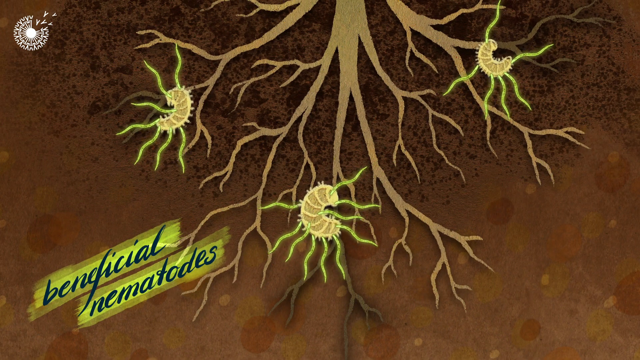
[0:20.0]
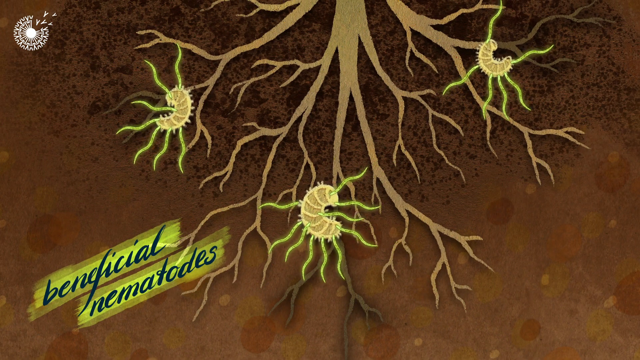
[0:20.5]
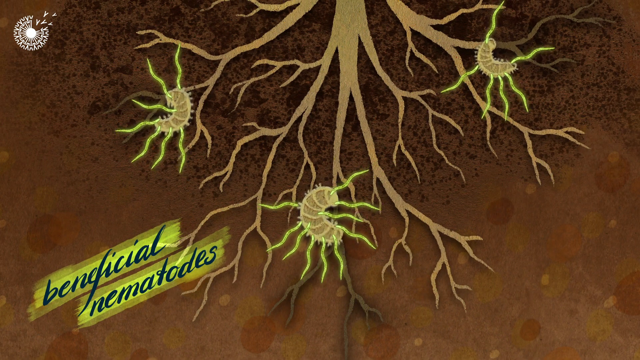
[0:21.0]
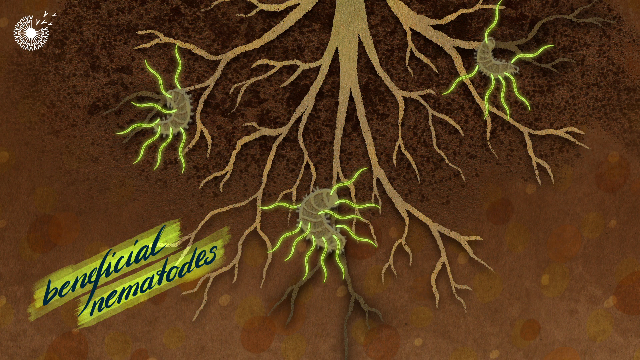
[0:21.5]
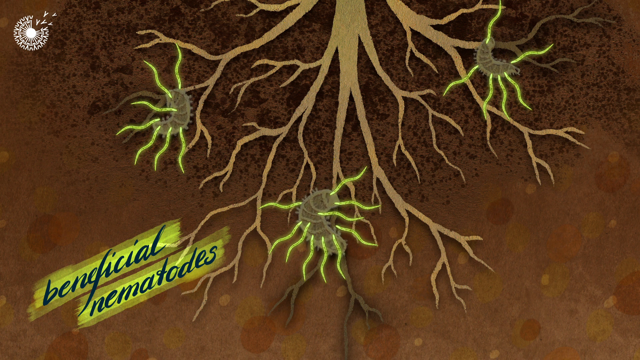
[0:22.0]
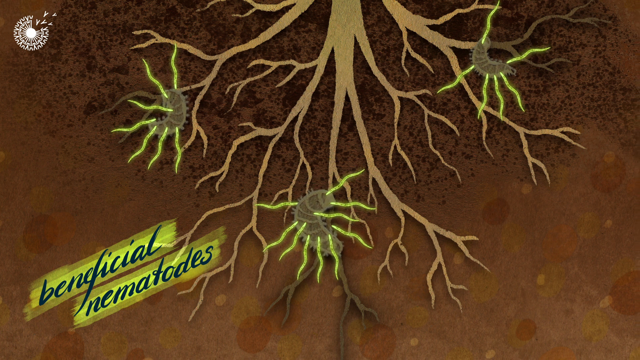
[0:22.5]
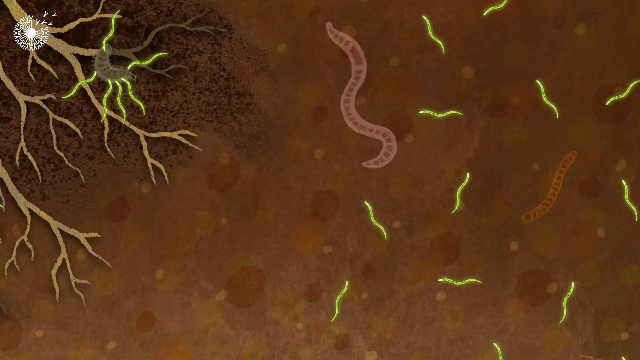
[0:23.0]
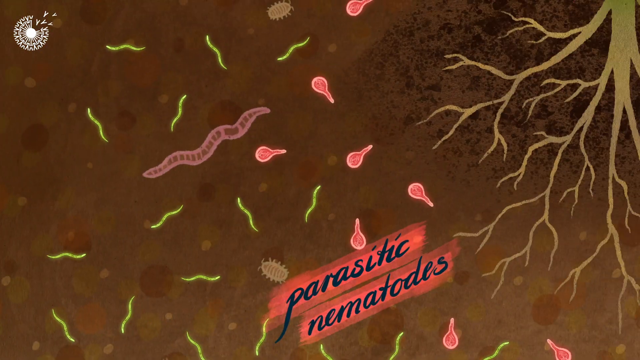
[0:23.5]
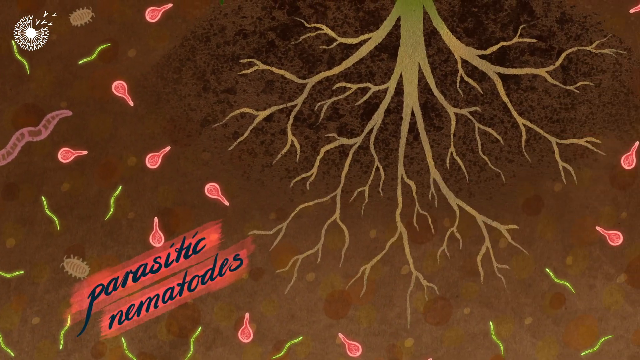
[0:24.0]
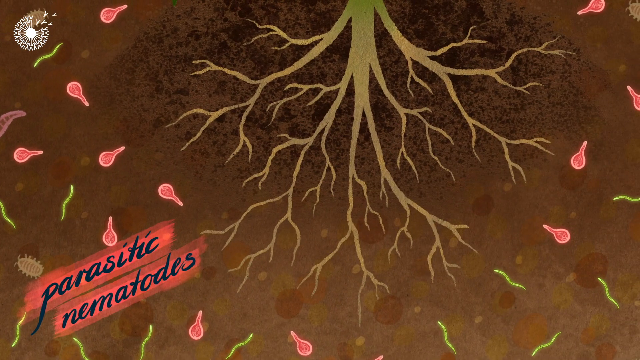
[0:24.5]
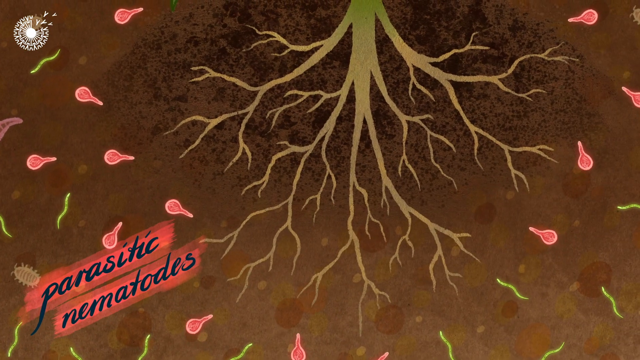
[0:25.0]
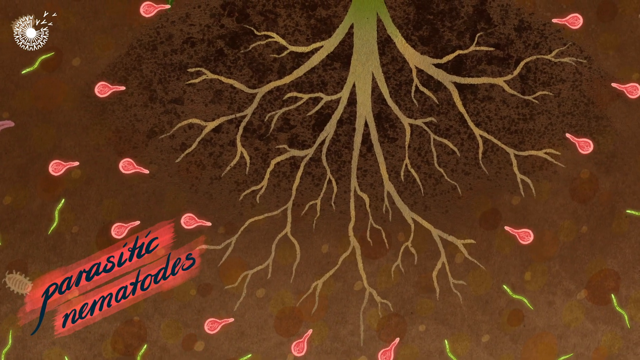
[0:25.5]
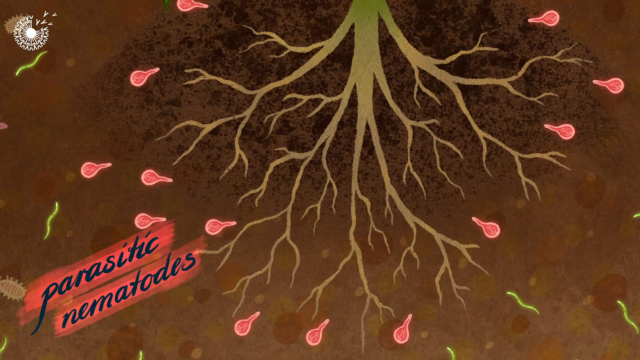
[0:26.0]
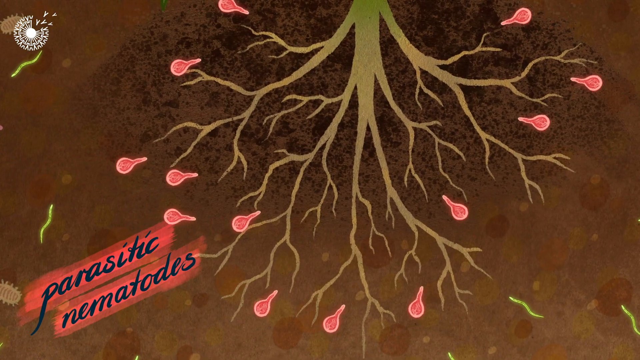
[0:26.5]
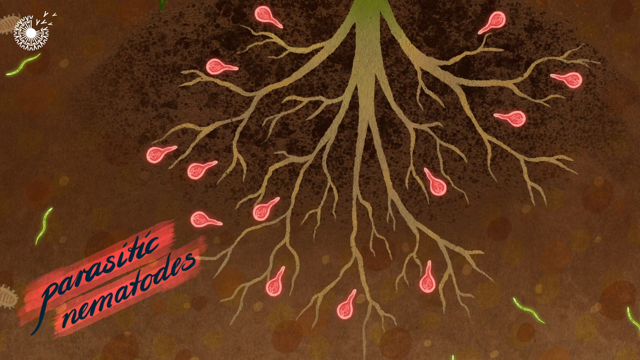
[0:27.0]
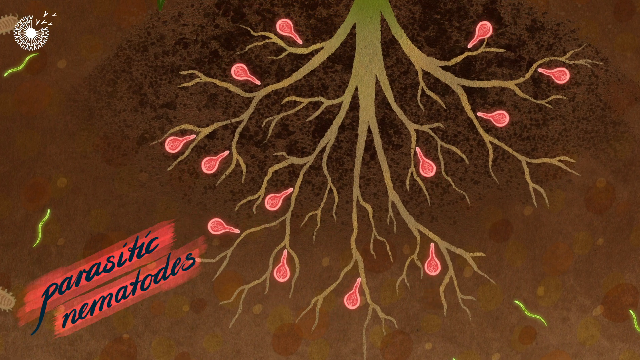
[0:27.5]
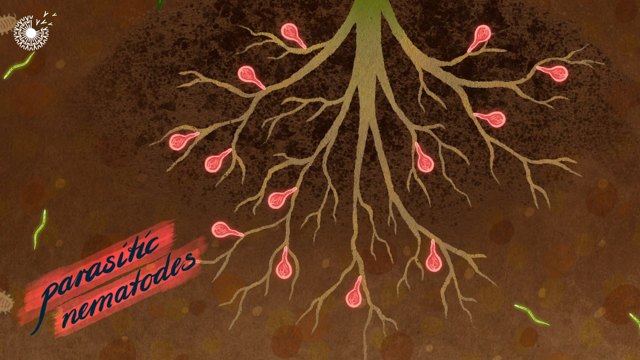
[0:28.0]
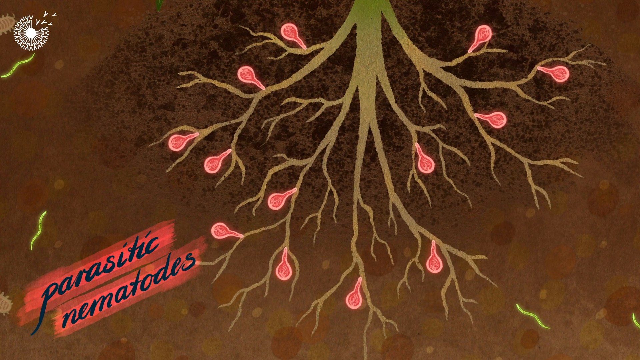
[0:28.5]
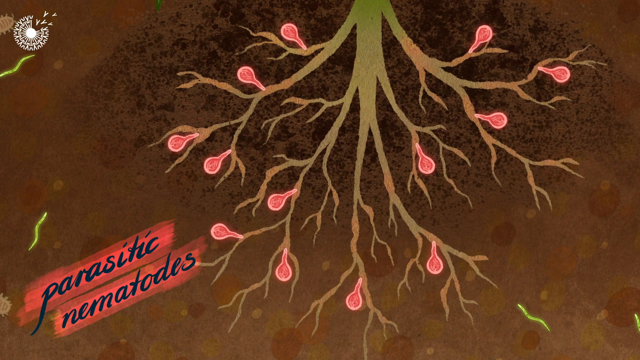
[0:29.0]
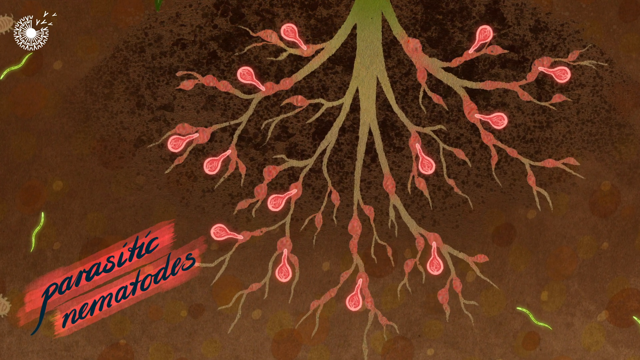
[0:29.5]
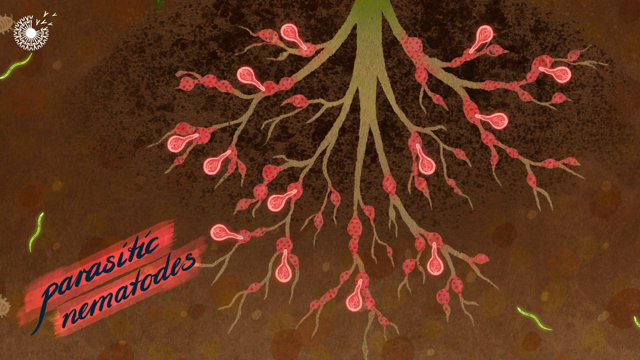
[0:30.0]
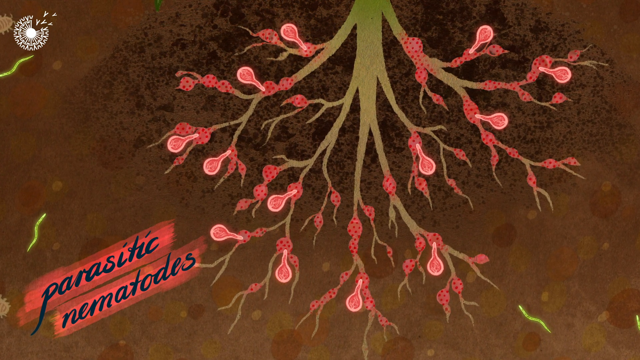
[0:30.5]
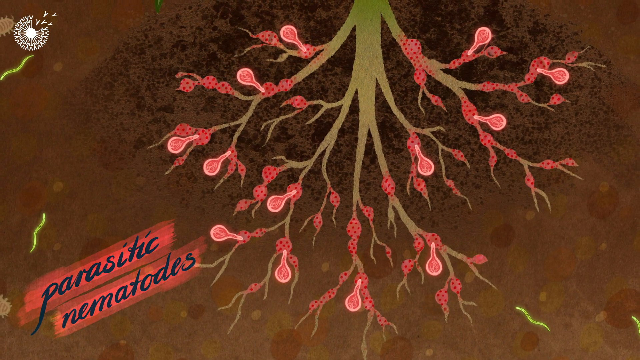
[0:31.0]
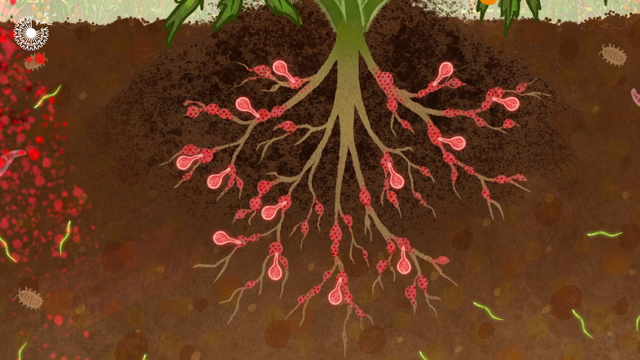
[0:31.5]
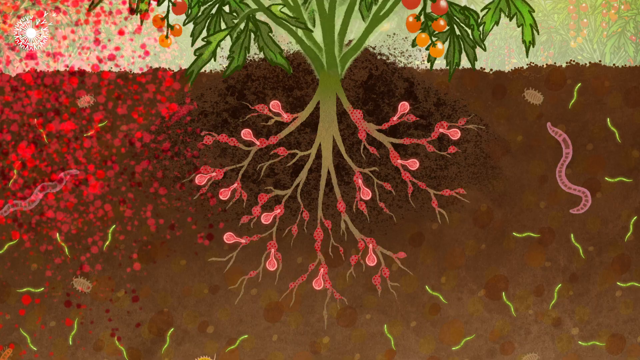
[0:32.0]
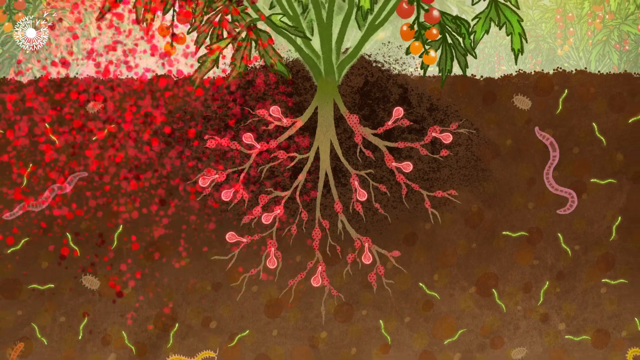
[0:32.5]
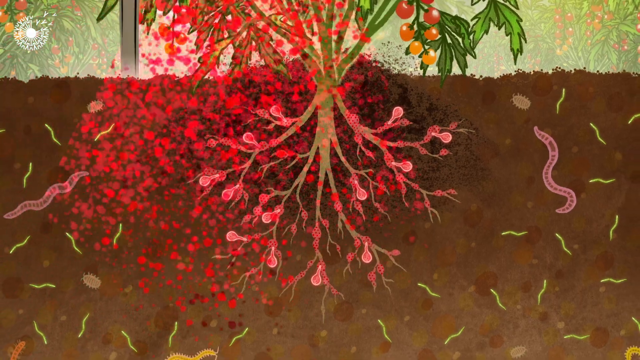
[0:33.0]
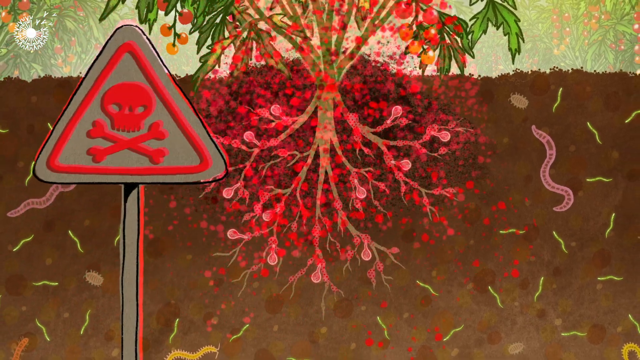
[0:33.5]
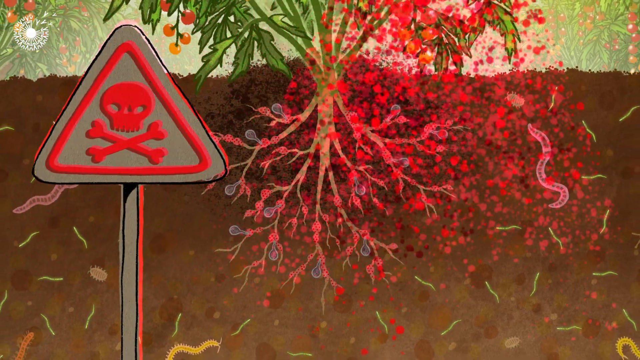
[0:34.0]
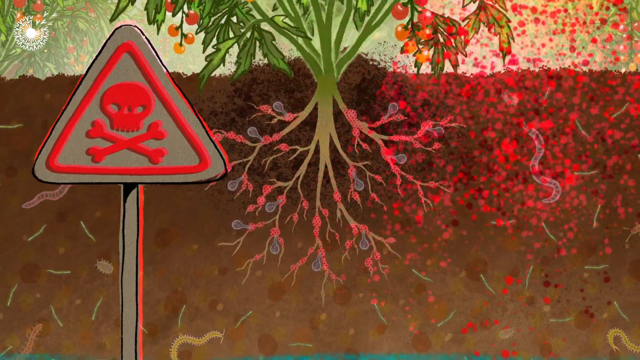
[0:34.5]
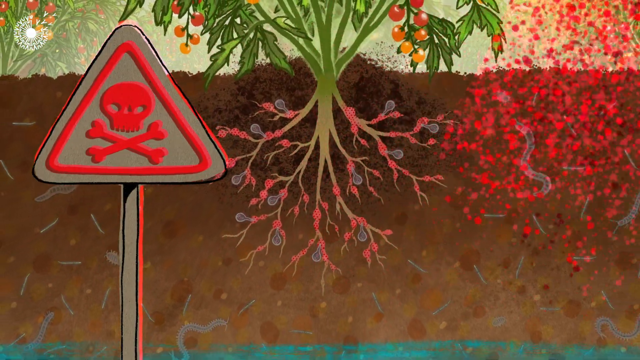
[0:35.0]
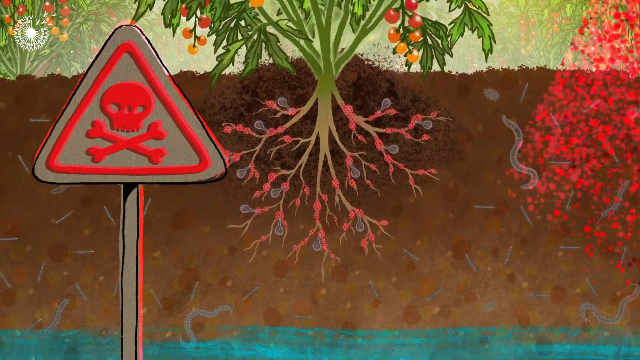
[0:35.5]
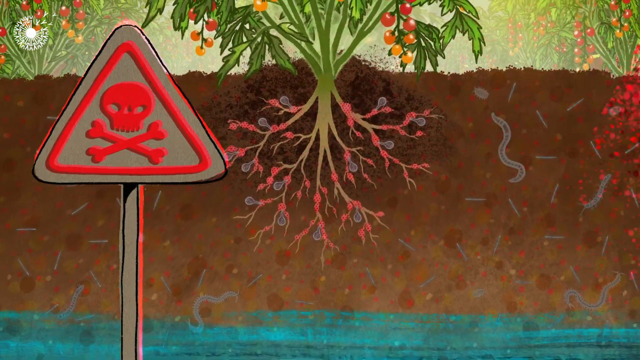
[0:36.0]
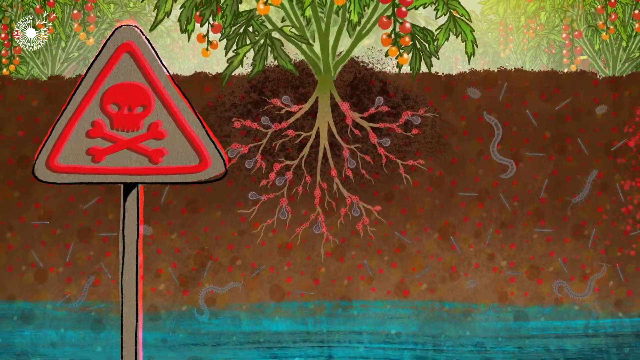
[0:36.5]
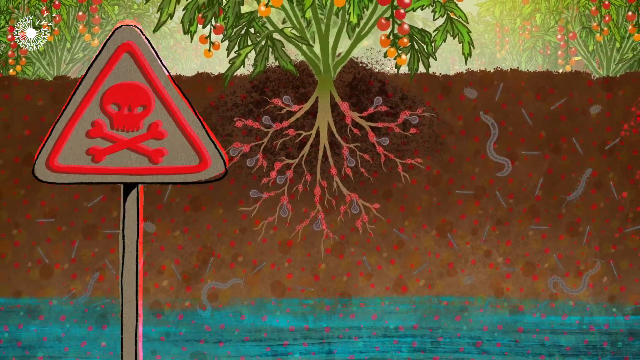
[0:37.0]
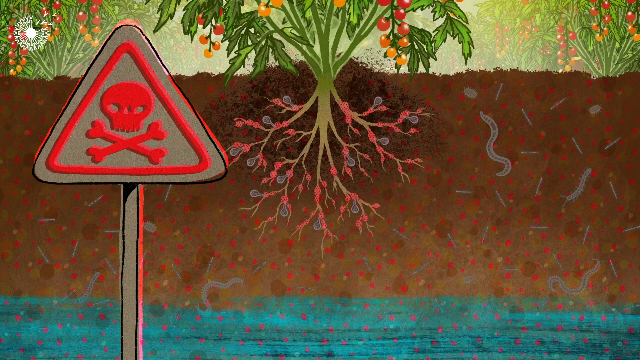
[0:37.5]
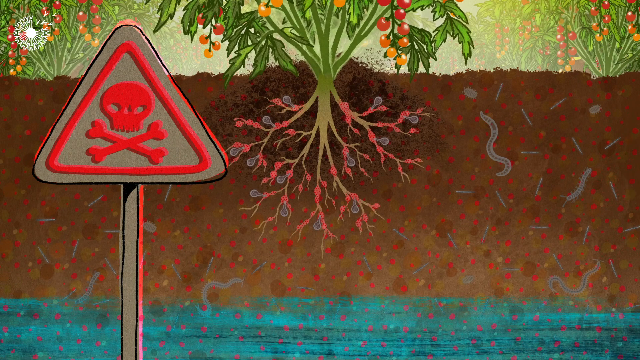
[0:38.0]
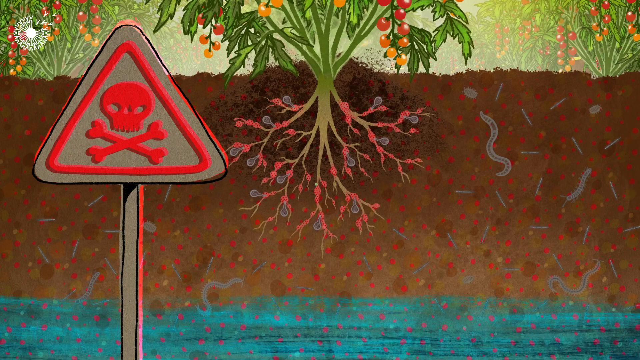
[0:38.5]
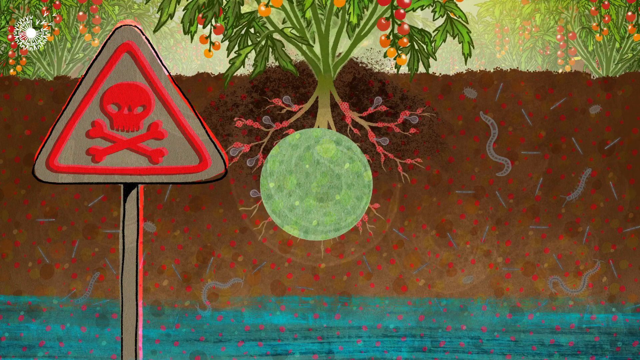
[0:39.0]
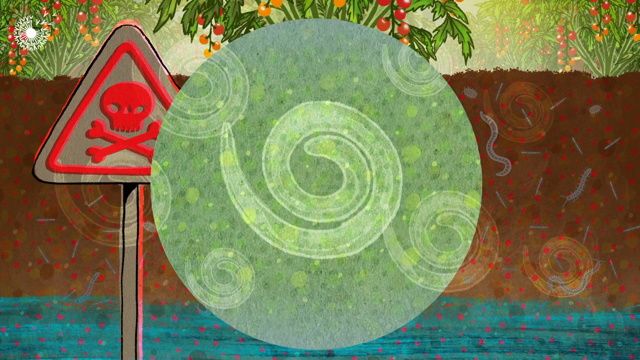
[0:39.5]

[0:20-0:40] Roots appear to run from the top middle downward, with three little green caterpillars on the left, right and bottom middle. Blue text at the bottom left reads "beneficial nematodes." Green worms seem to attack the caterpillars at the bottom of the roots, and the caterpillars turn pale green and disappear. The view pans to the right to more roots, where there apparently are no more caterpillars, but red bulbs and green worms are around. At the bottom left, blue text highlighted in red reads "parasitic nematodes." The red bulbs come into the roots, start sucking on them and make red bulbs on the roots. The view zooms out to show the plant and its roots, and a red cloud moves from left to right. Suddenly a triangular sign with crossbone skulls pops down from the top to the bottom left. The red cloud moves from left to right, and the whole land looks dotted with red dots. The scene then transitions to a green circle with green swirls of worms, which spreads out.